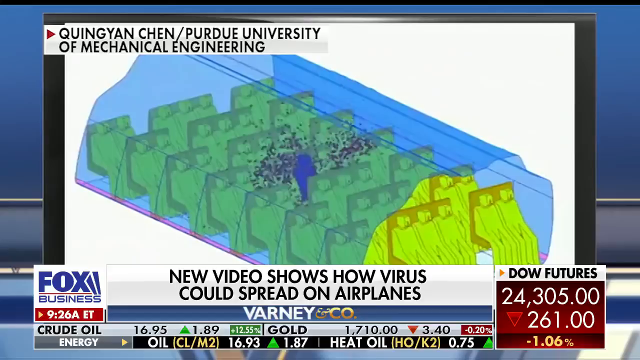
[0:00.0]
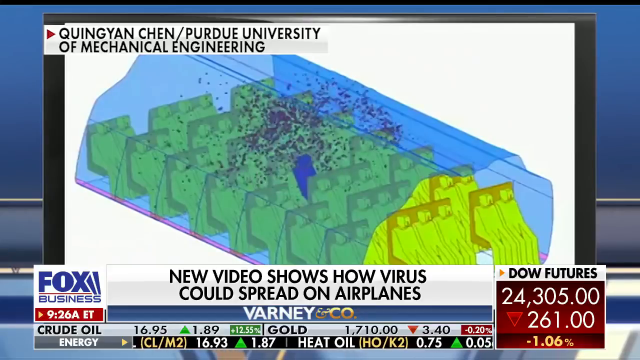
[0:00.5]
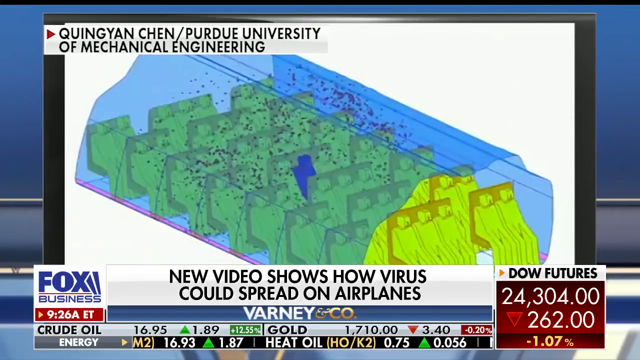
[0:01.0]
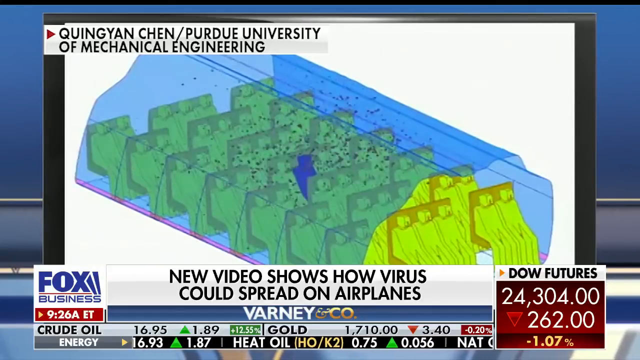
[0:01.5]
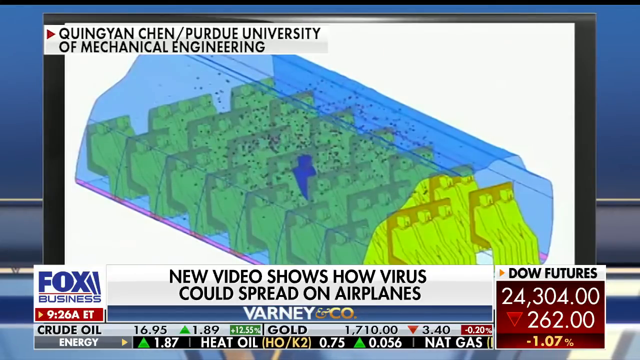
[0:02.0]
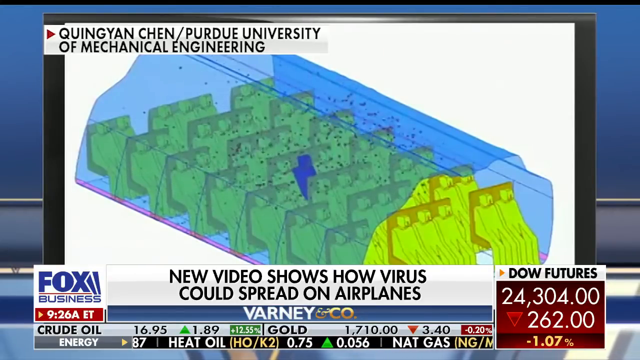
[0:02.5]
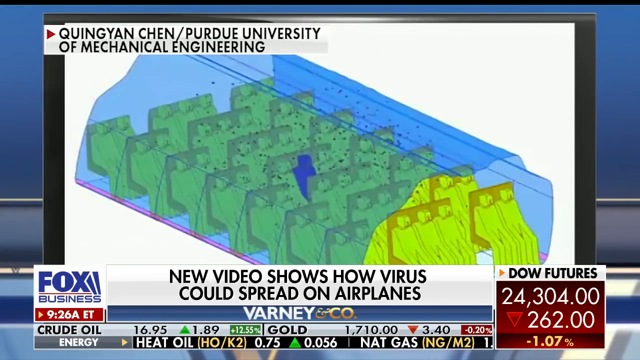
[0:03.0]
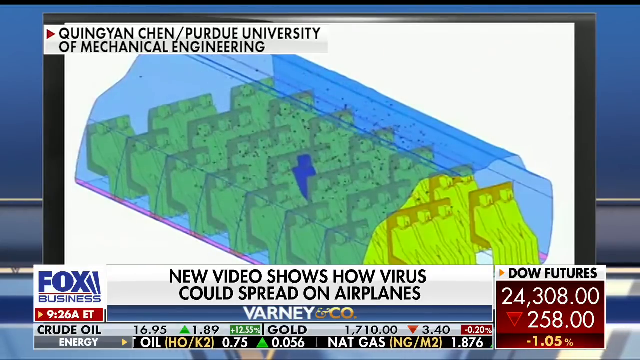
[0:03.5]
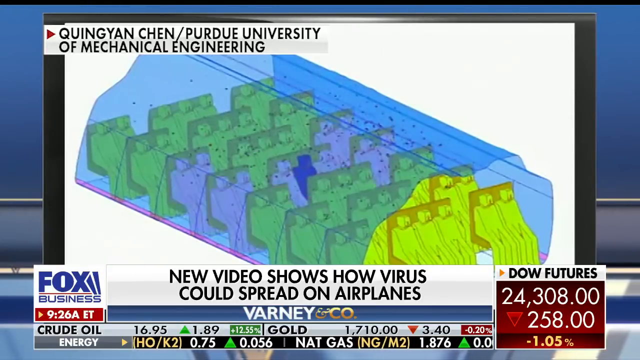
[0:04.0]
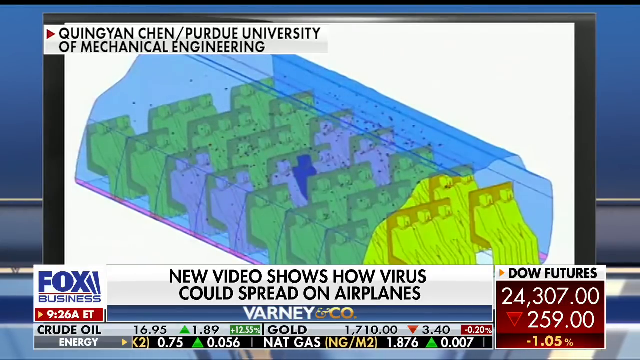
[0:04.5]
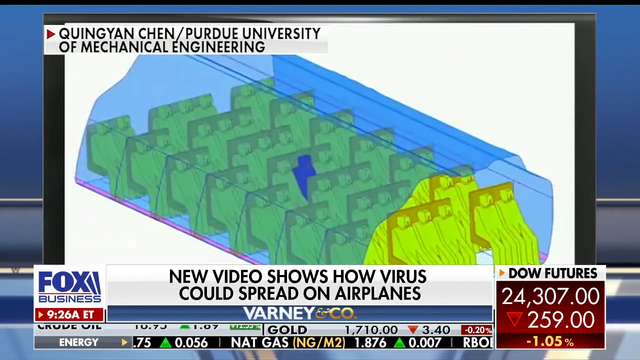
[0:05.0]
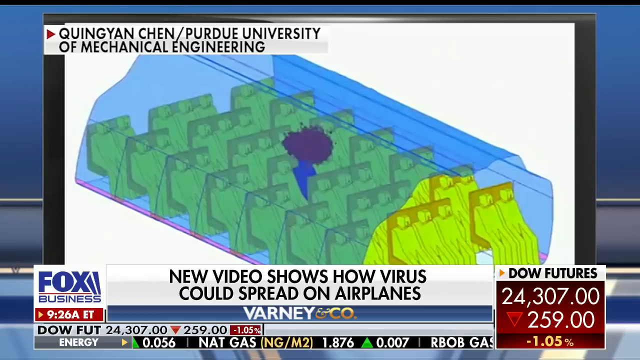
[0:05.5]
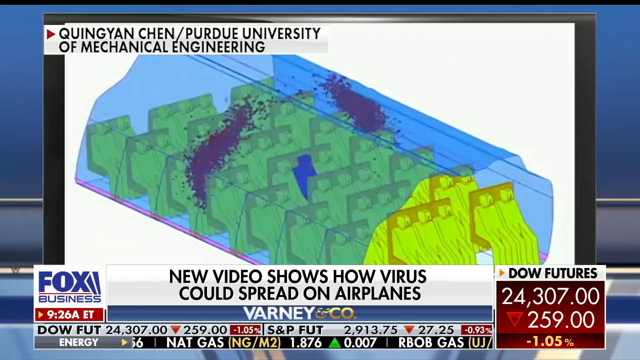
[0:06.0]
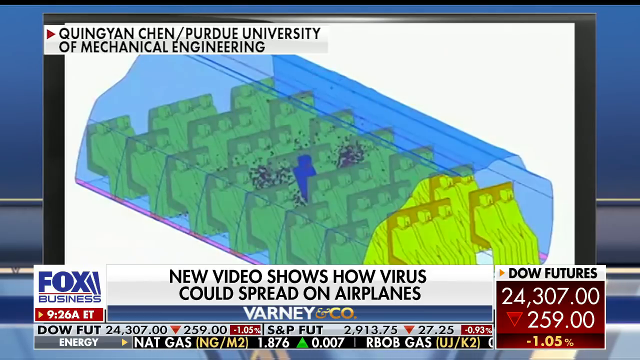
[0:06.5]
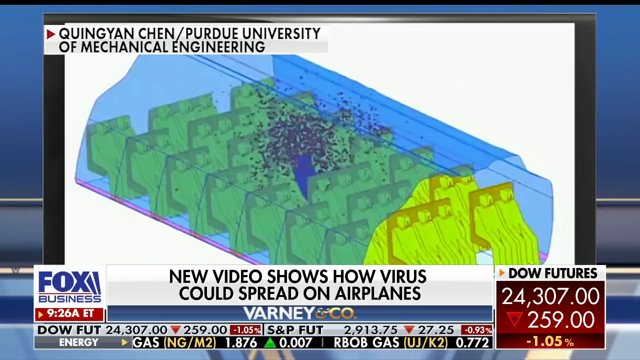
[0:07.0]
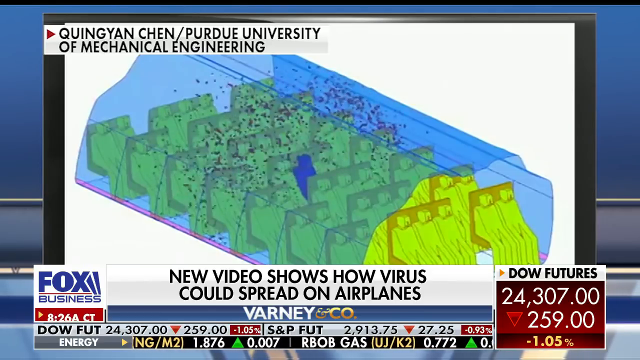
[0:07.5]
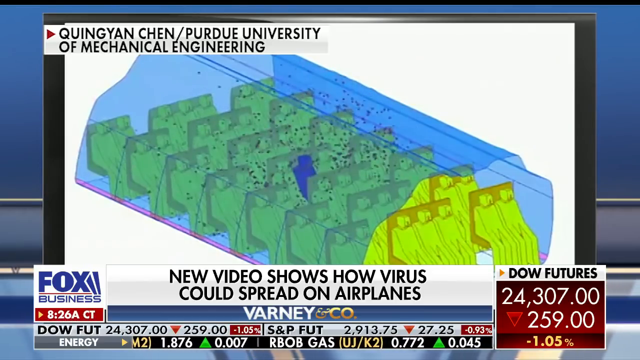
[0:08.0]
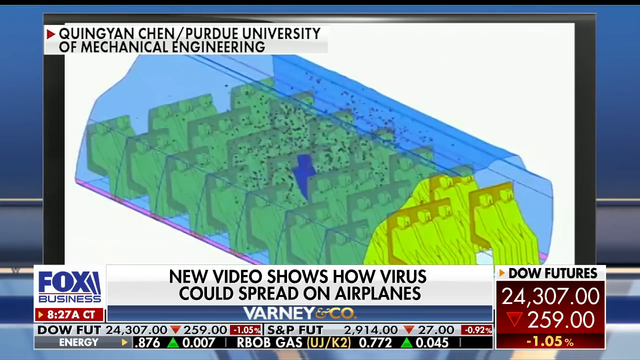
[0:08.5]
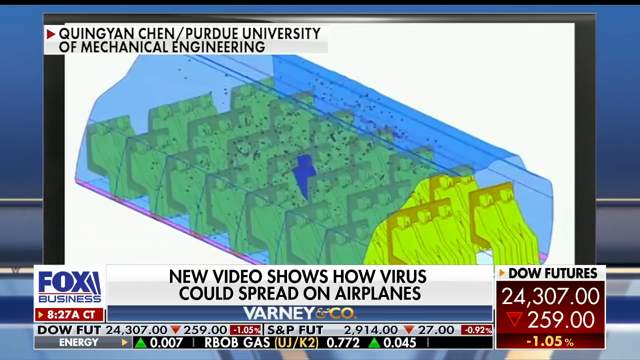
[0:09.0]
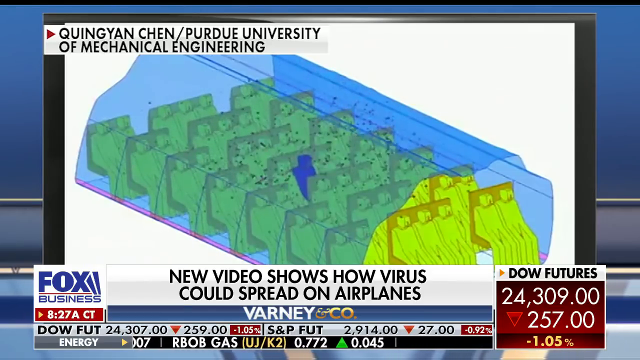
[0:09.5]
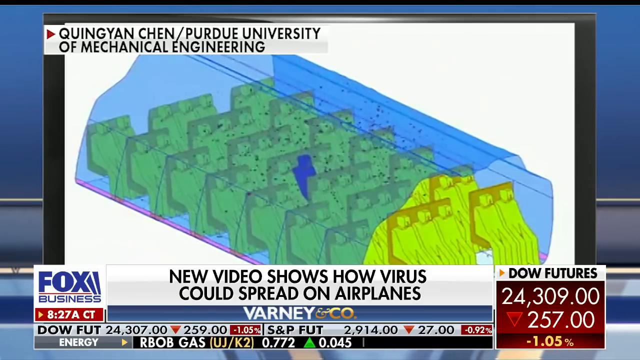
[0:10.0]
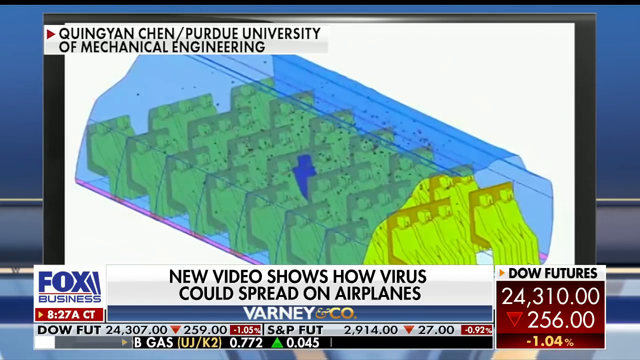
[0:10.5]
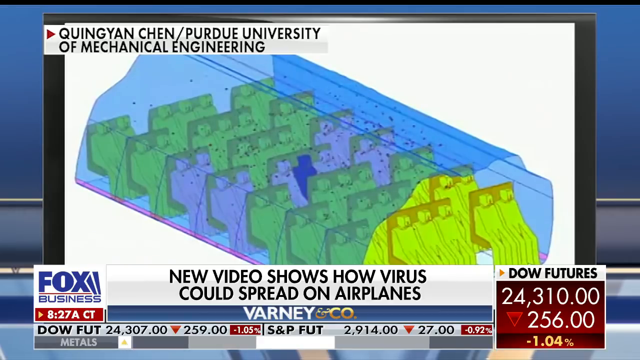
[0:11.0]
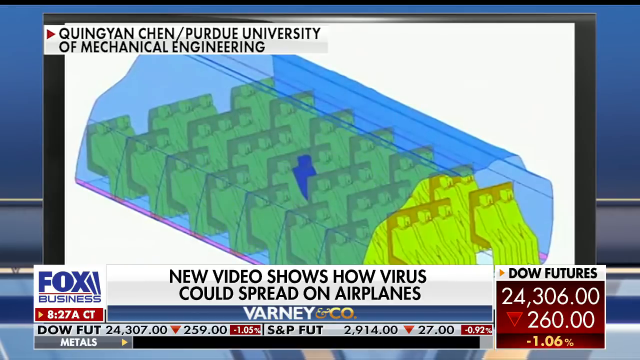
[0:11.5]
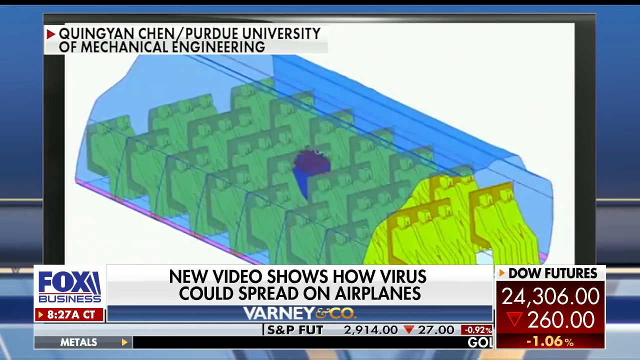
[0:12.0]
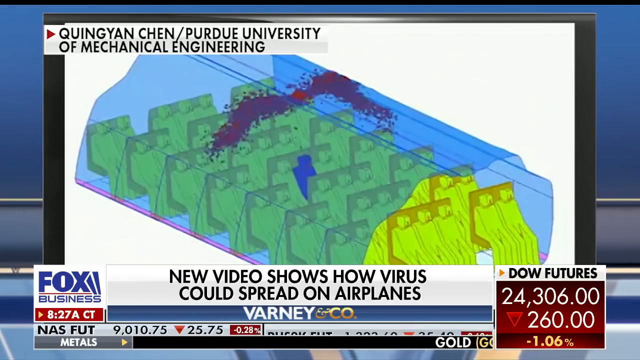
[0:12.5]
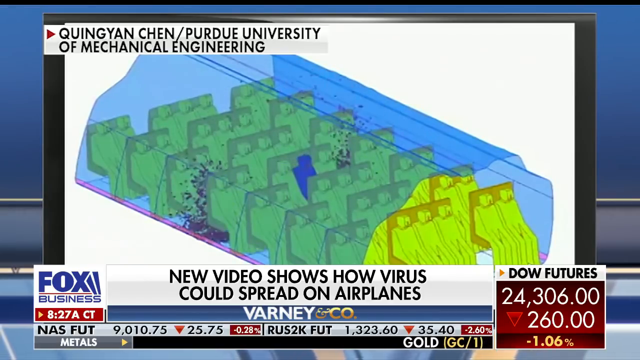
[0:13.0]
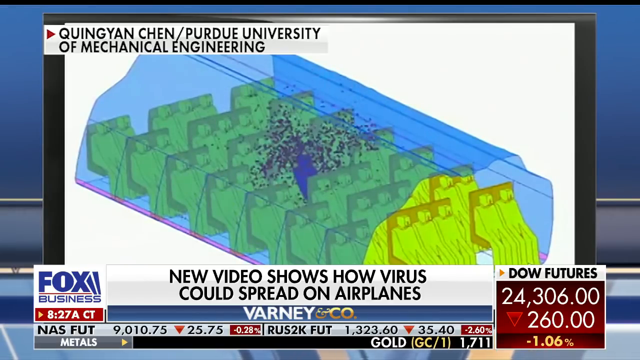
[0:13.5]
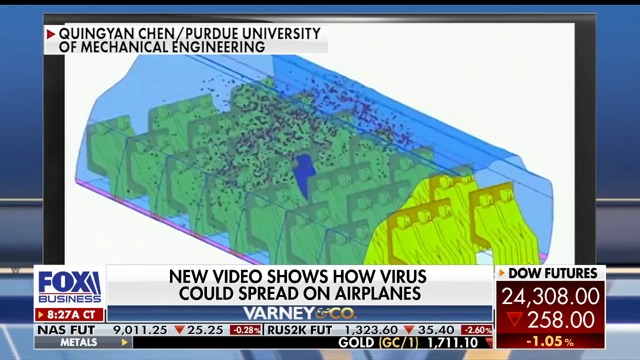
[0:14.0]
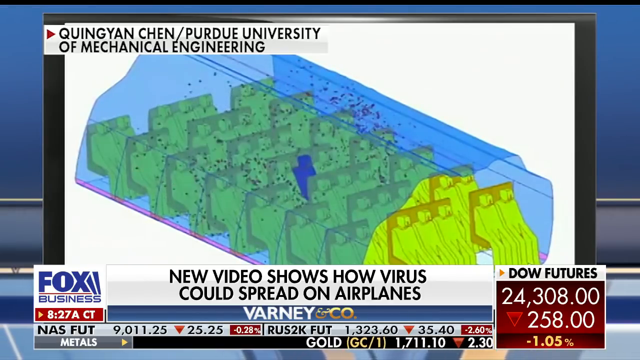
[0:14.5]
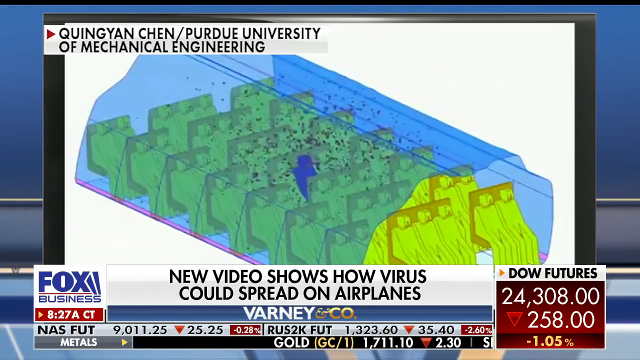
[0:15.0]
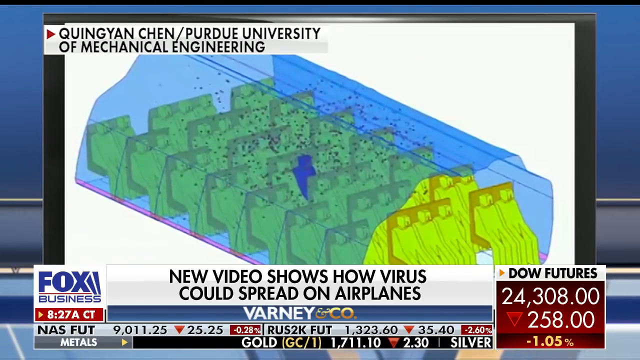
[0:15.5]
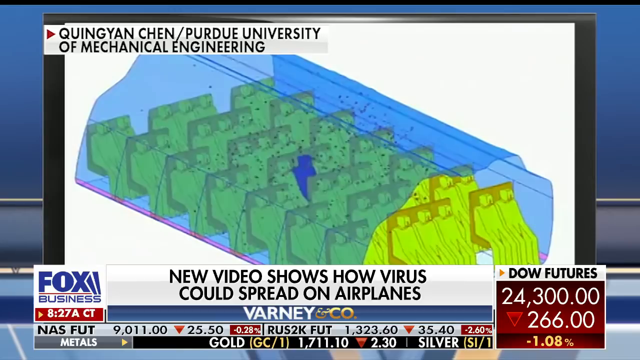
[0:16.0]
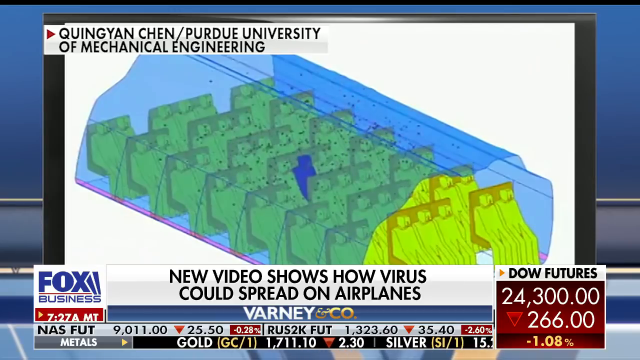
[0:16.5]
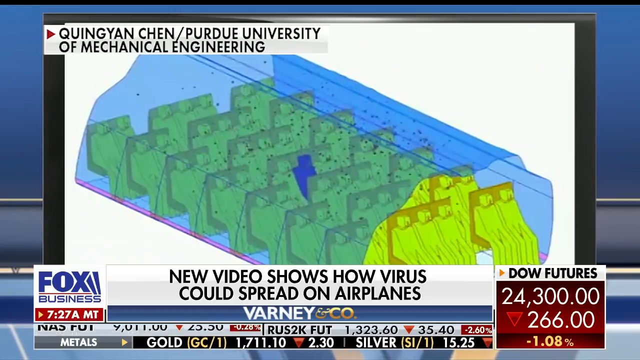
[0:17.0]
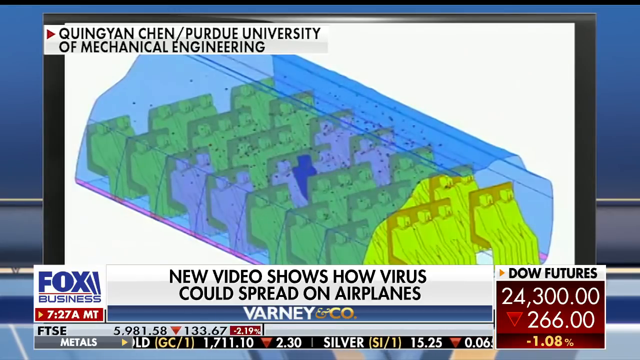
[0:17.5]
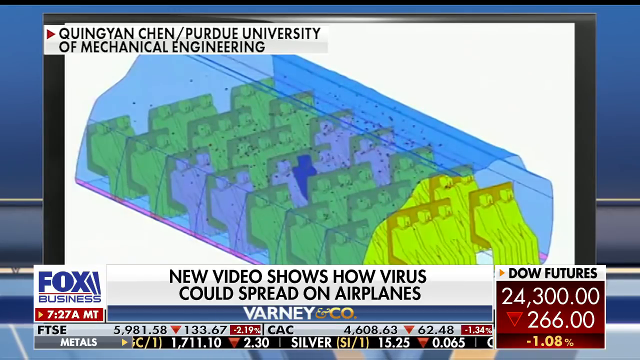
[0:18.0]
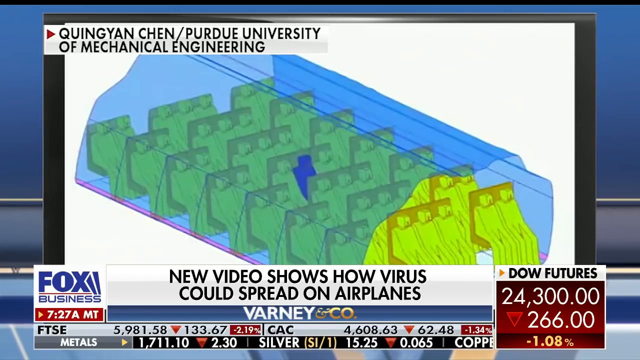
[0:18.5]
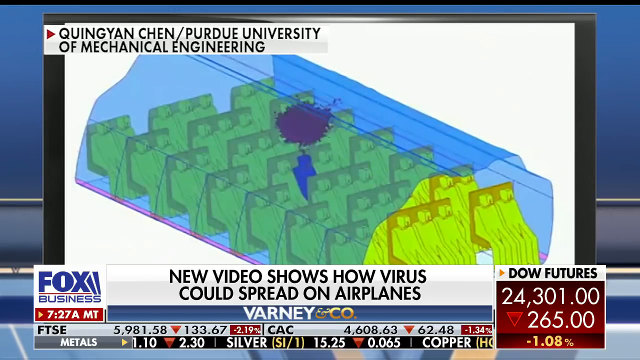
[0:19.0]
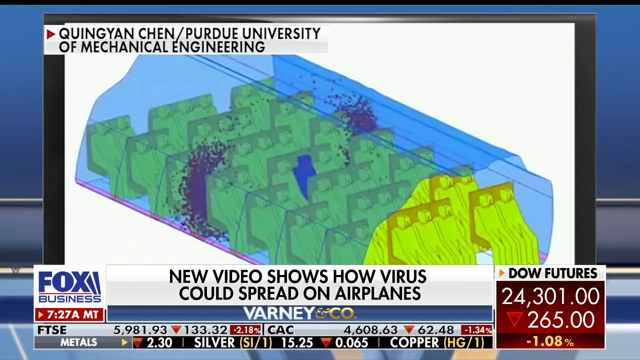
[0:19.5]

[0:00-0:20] A Fox Business clip from the show Varney and Company shows a computer animation of how viruses spread through an airplane cabin, or something similar. The animation was created by Quingyan Chen from Purdue University of Mechanical Engineering. The header says "new video shows how virus could spread on airplanes," and a marquee shows NASDAQ prices for the day. The animation shows an airplane cabin with rows of seating and people on them. A blue film is over the cabin, with little dots moving around that apparently represent the viruses. One passenger in the middle is blue, while the others are yellow. The blue passenger is the infected one, and once they sneeze, the dots spread very quickly, first in groups and then scattering throughout the cabin. As the dots scatter, the people closest to him on the left and on the right are infected, indicated by them turning purple.